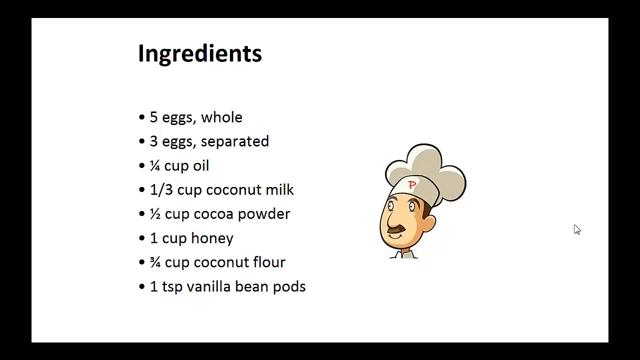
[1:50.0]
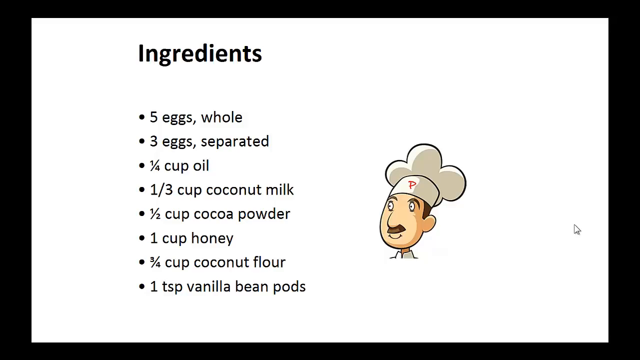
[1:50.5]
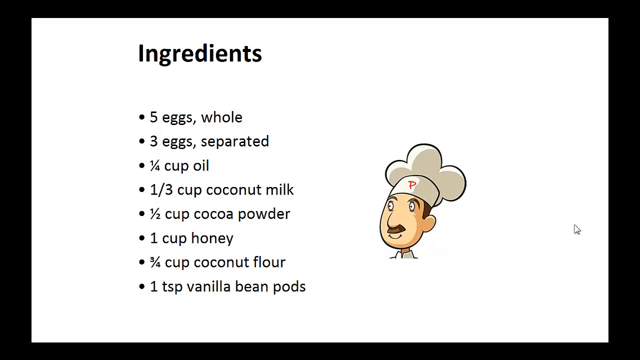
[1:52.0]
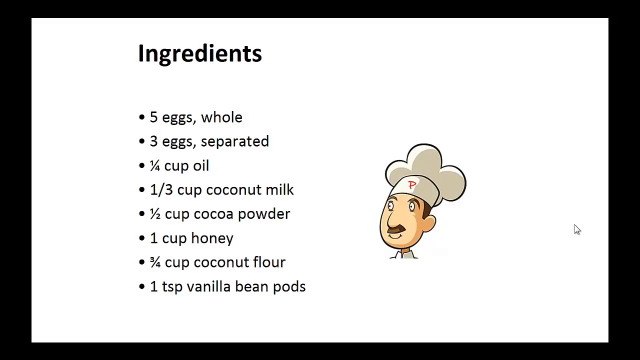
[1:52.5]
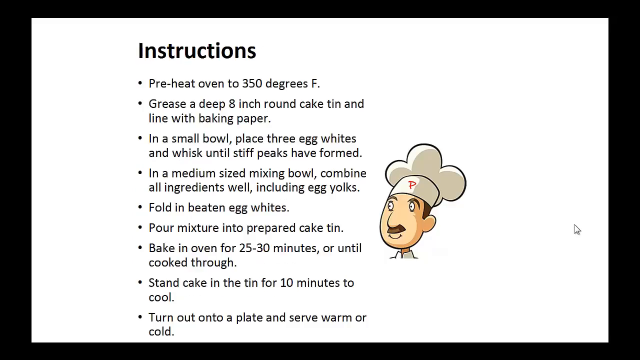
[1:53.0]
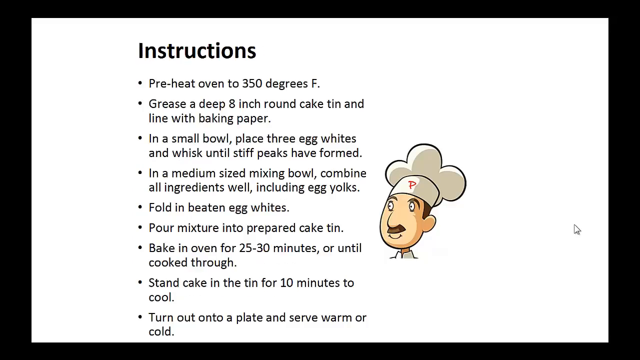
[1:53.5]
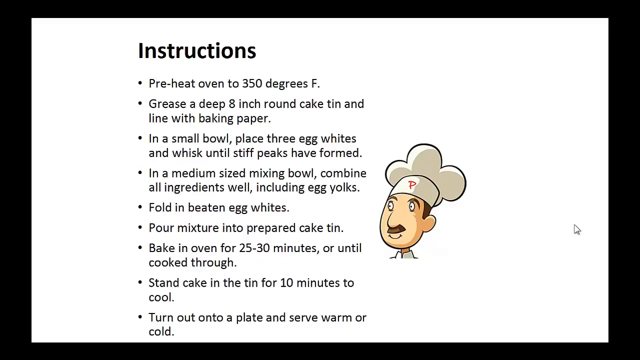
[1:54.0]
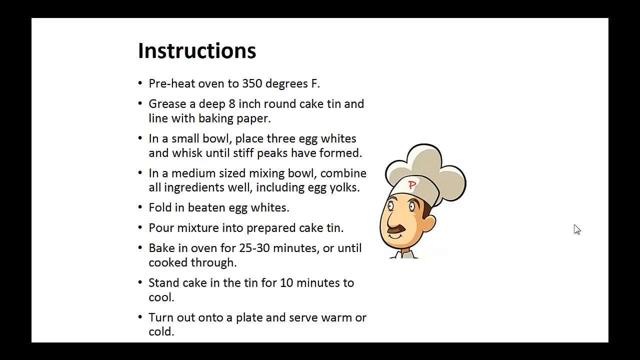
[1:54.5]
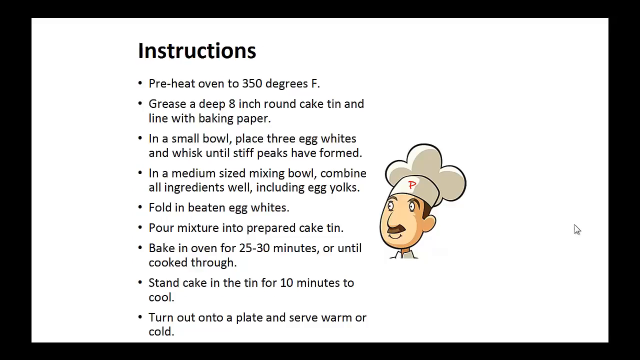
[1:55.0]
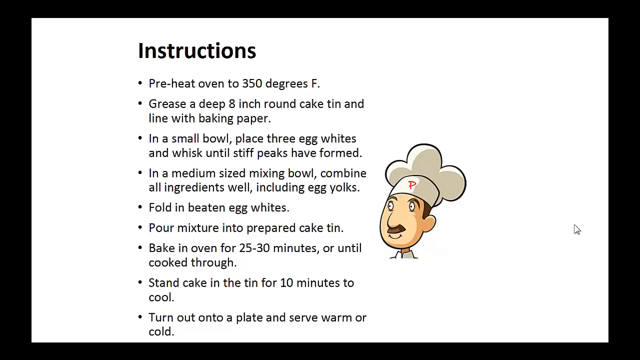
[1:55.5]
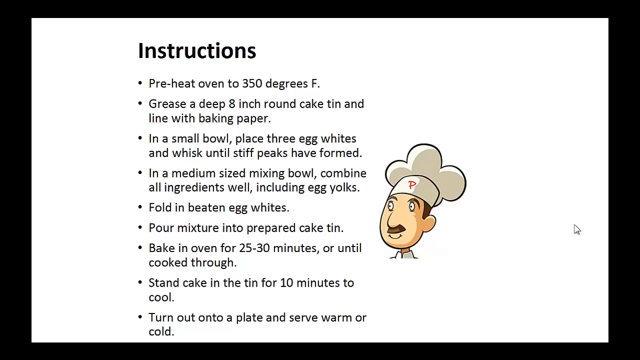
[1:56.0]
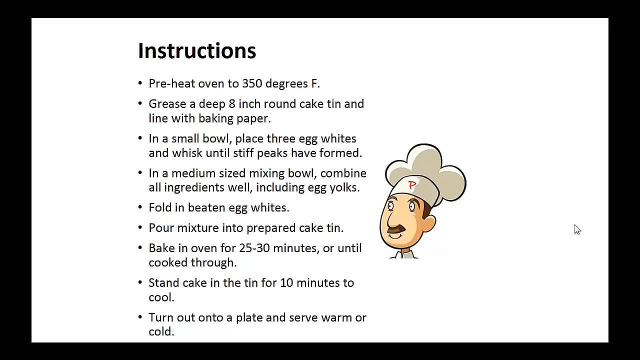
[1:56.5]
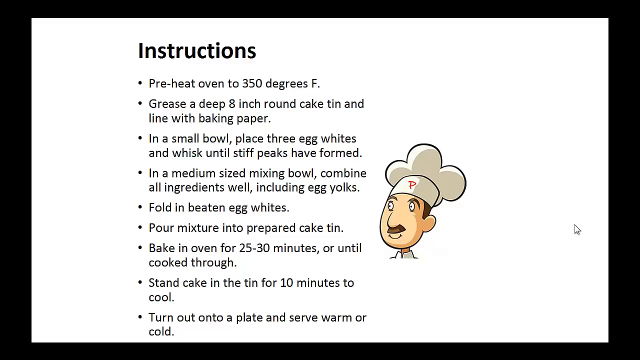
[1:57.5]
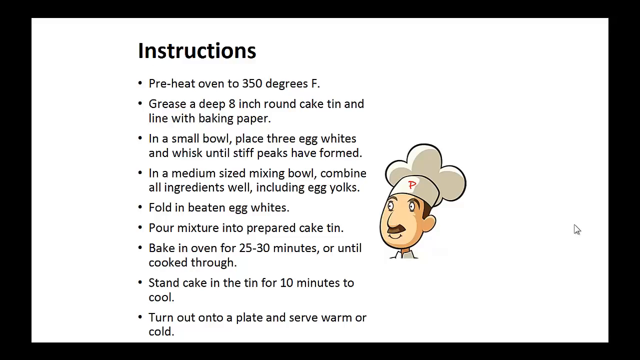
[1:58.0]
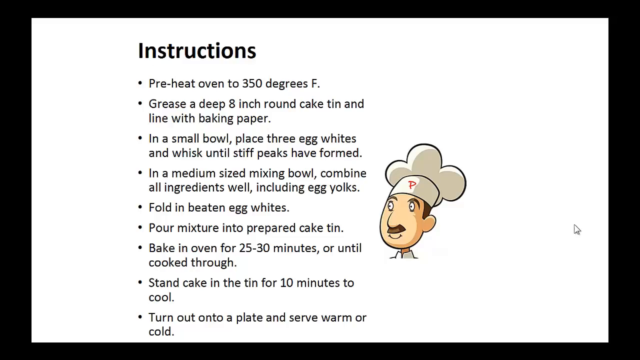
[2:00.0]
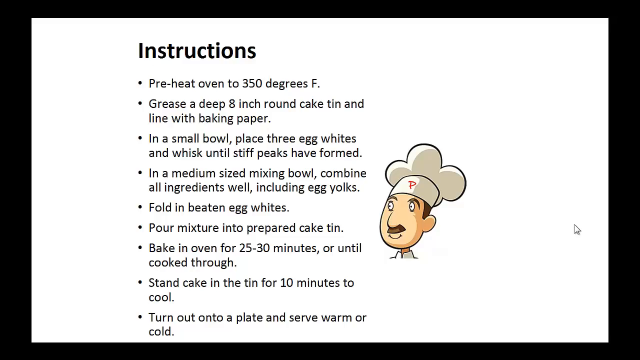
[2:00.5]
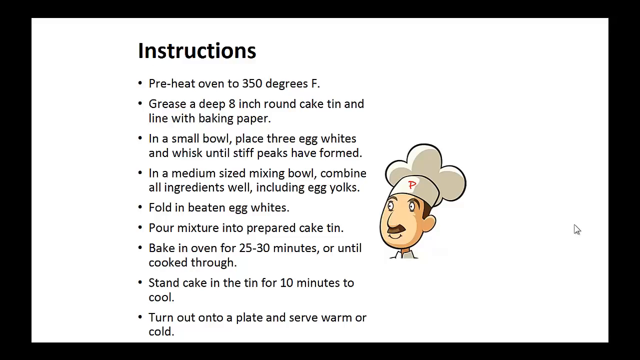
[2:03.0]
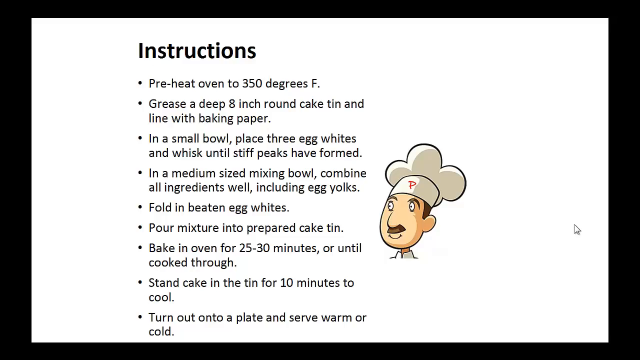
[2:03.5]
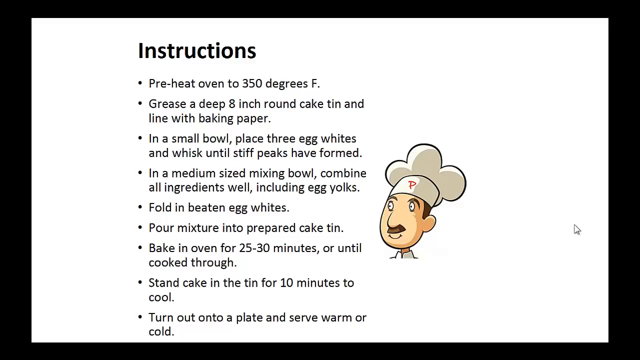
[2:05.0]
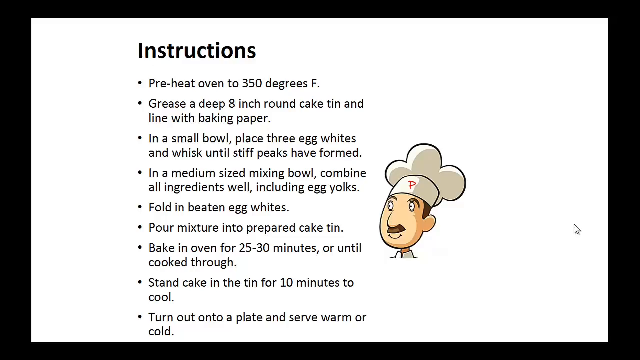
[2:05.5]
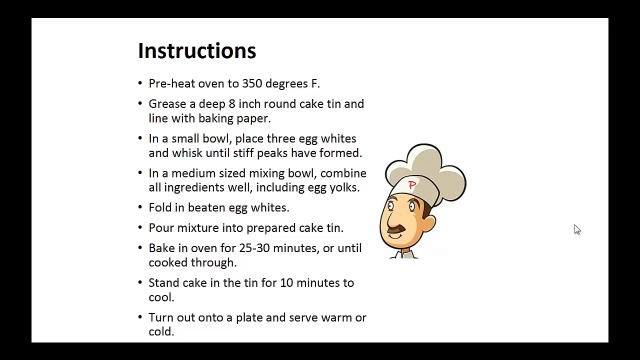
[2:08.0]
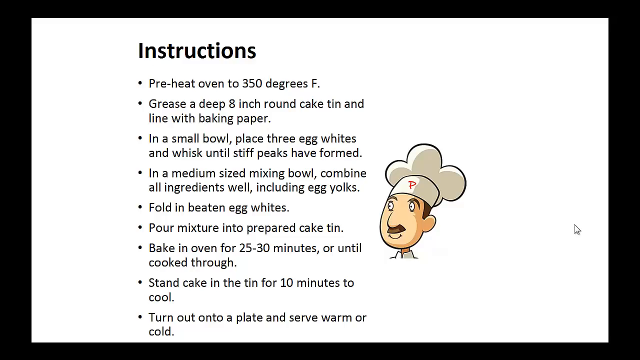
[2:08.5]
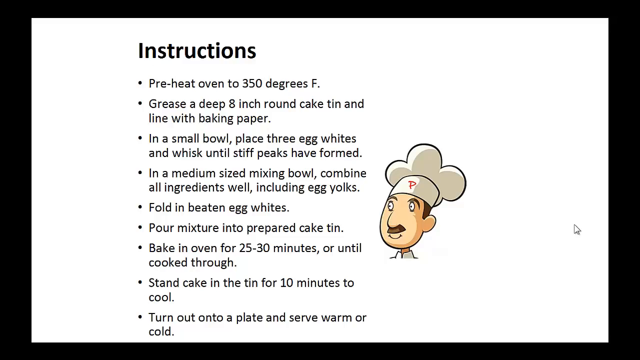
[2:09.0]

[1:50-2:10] An ingredients list is shown in a small black font under the heading "ingredients", laid out in bullet points. The first points begin with "five" and "whole" and with "three" and "separated", followed by "one and a half cup oil", "one and a half cup coconuts", "one cup of cocoa powder", "one cup of honey", "one cup of coconut flour" and "one teaspoon of vanilla beans powder". A cartoon also appears, seemingly representing the chef who baked the cake. Instructions for baking the cake then follow.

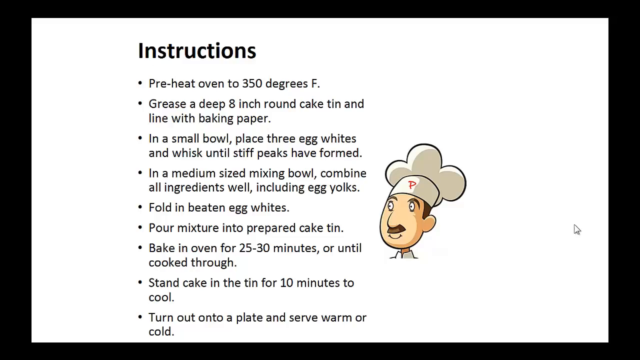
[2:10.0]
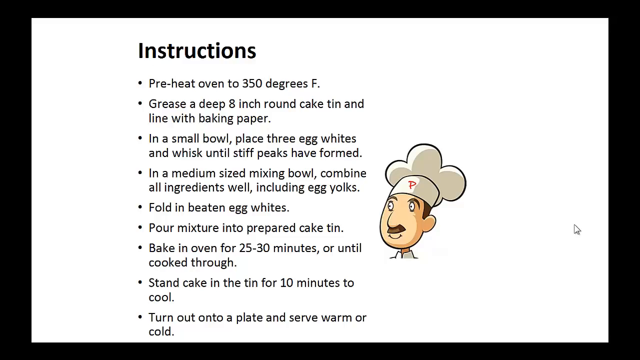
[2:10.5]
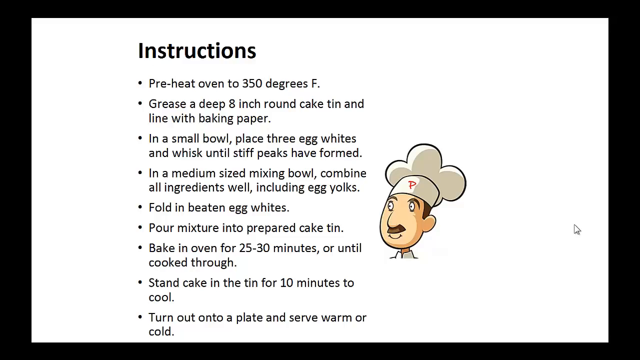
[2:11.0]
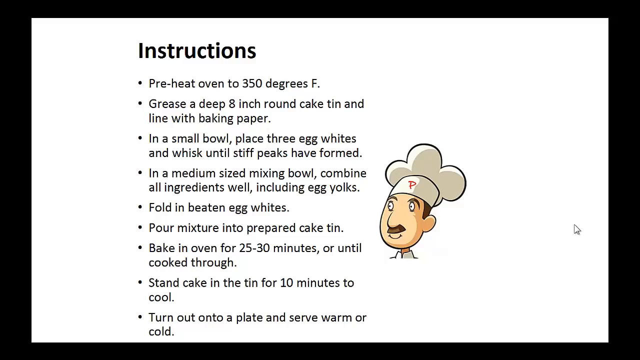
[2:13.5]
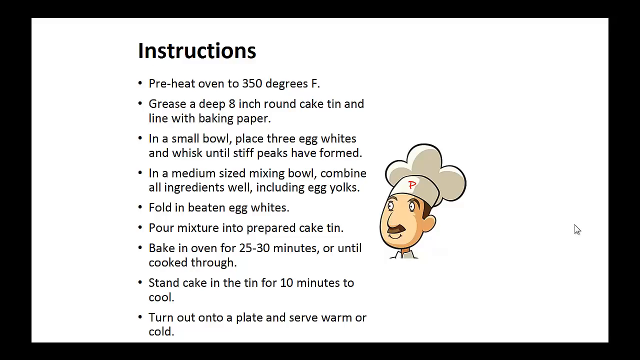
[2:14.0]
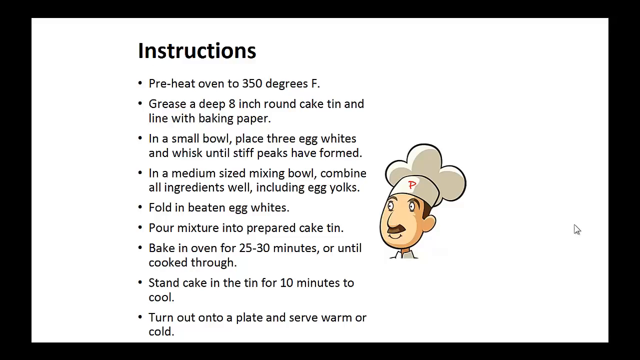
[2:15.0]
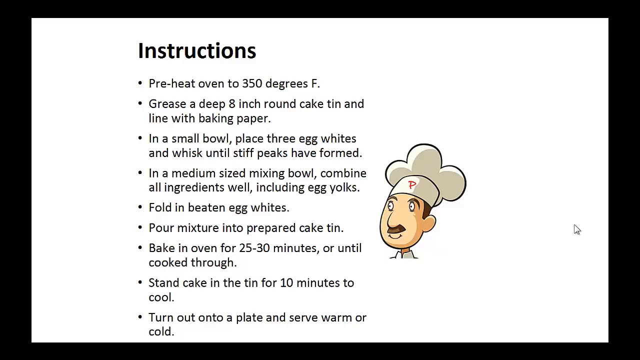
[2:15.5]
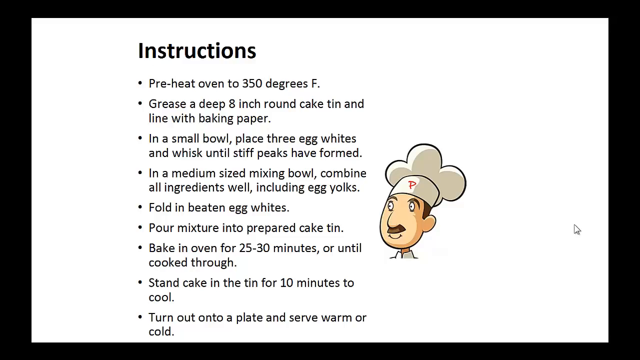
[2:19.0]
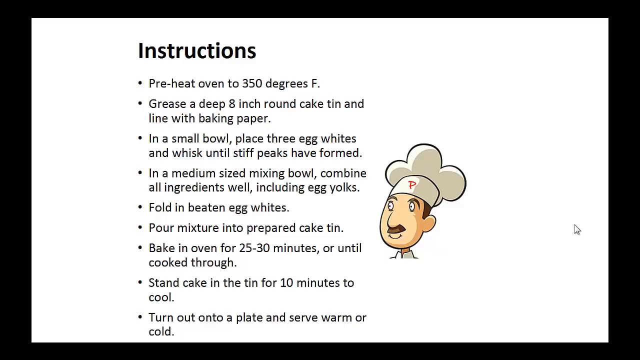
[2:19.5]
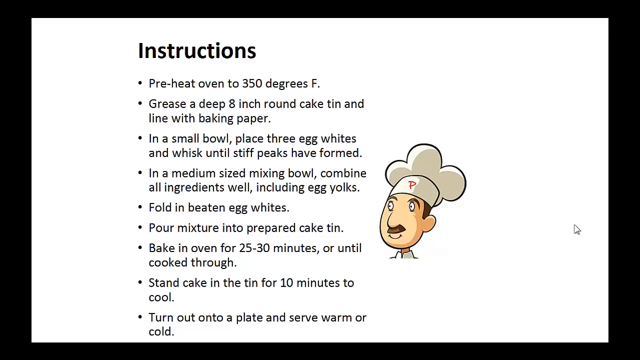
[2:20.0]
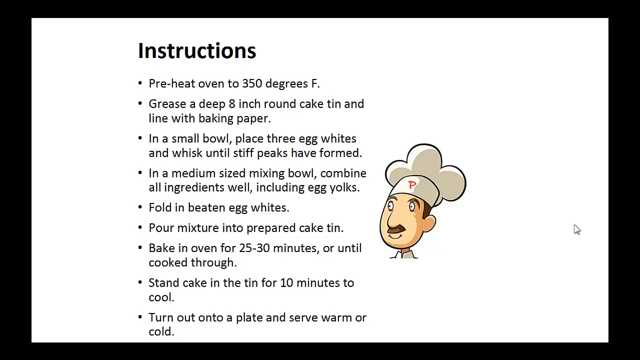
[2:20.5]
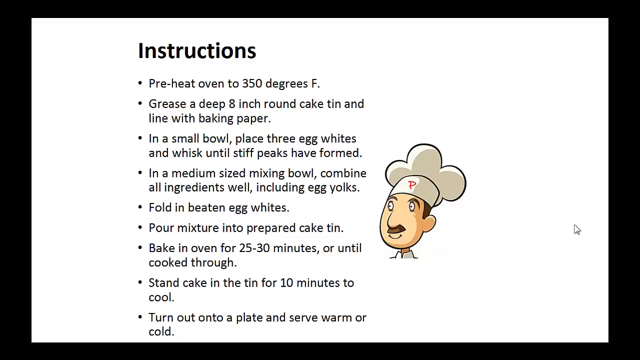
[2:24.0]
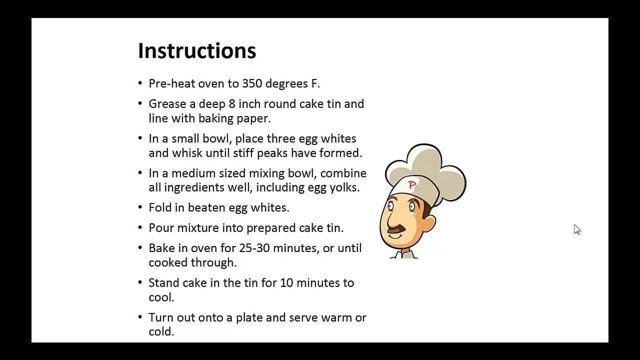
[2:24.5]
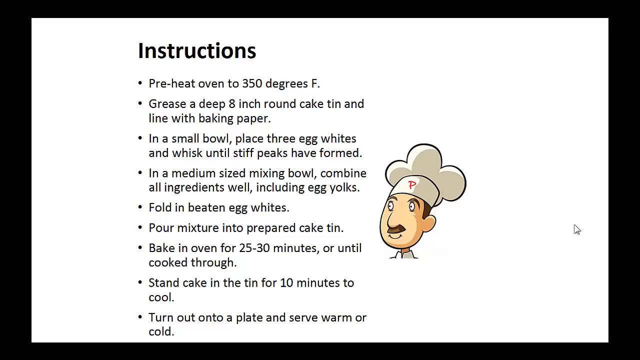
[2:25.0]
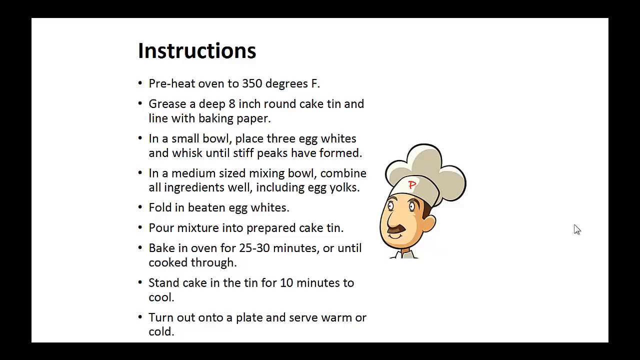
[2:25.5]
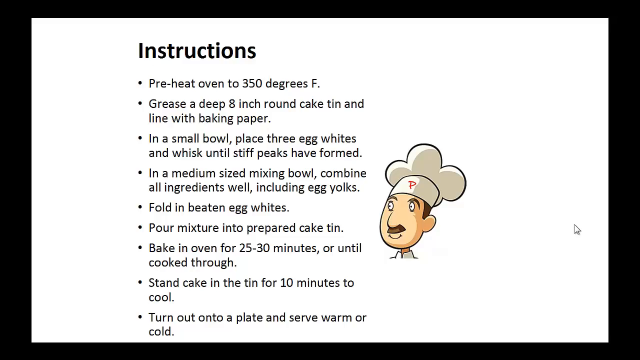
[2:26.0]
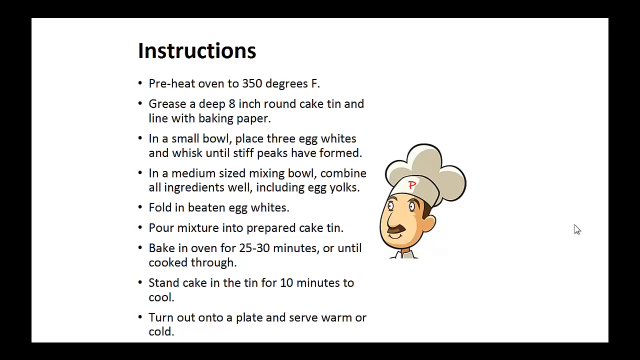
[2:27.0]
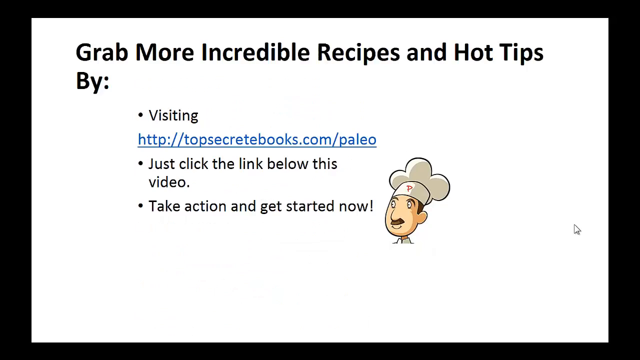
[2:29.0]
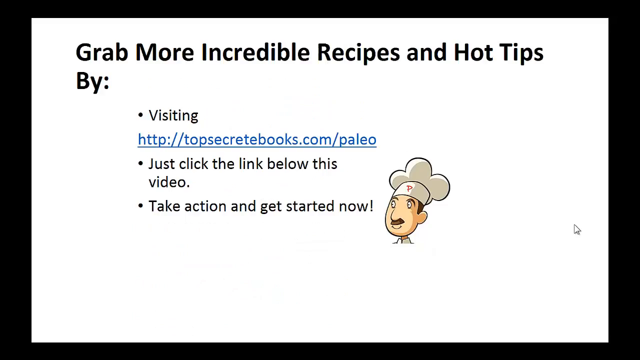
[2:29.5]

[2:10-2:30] Instructions are written in point form in black, with the word "instructions" in bold. The first reads "preheat the oven to 350 degrees and grease a deep eight inch round cake tin and line with baking paper". Next comes a step beginning "in the small bowl, place three eggs", then one beginning "In a medium sized mixing bowl, combine all ingredients well", followed by "fold in beaten egg white", "pour mixture into prepared cake tin", "bake in oven for 25-30 minutes, or until cooked through" and "stand cake in the tin for 10 minutes to cool".